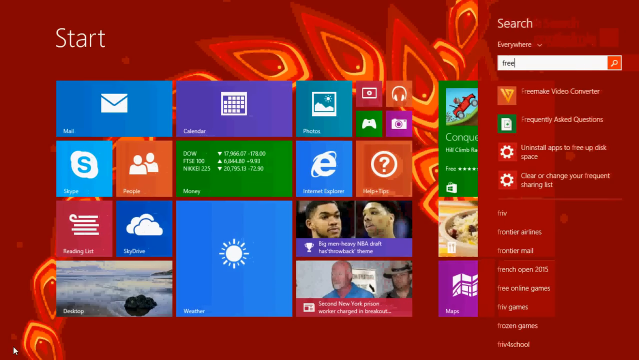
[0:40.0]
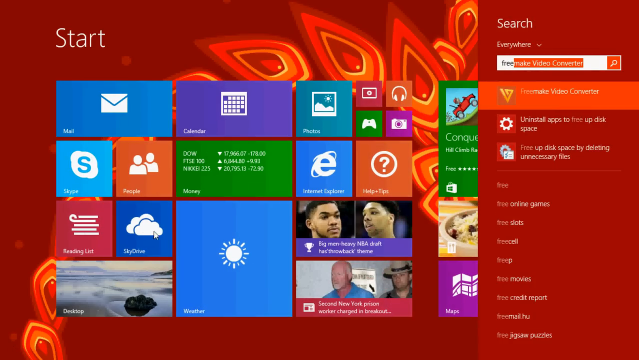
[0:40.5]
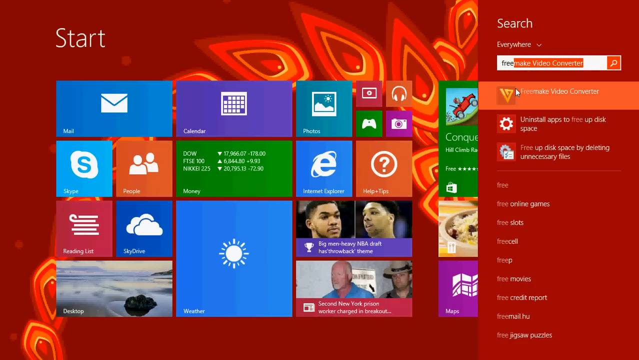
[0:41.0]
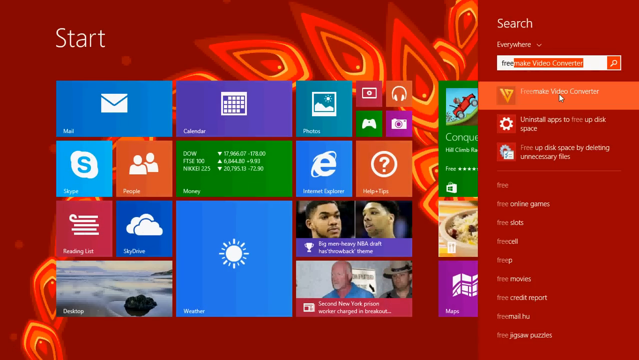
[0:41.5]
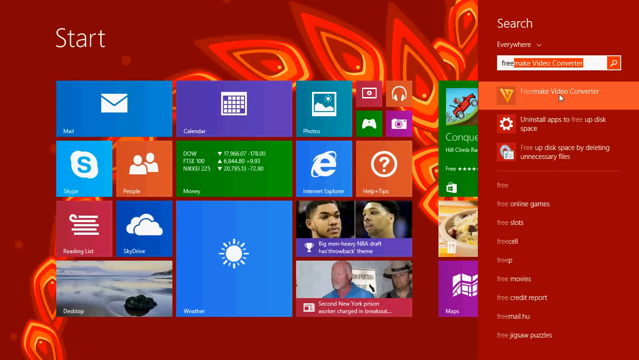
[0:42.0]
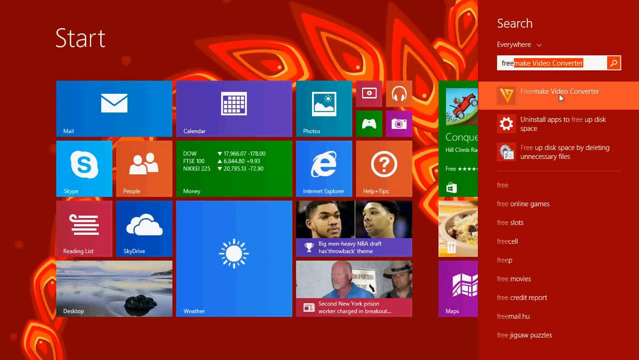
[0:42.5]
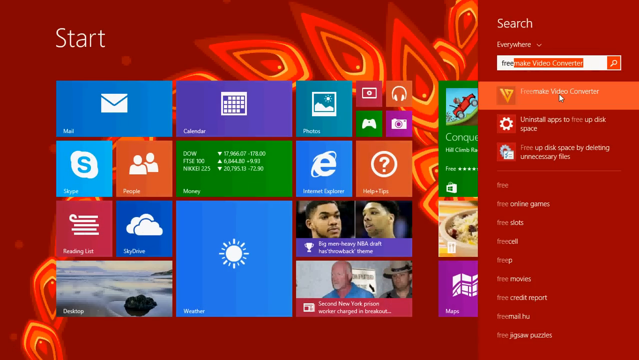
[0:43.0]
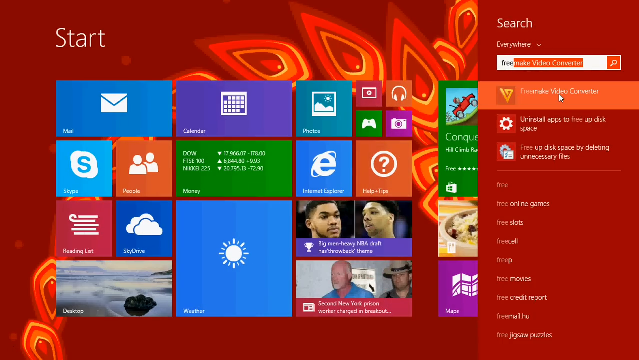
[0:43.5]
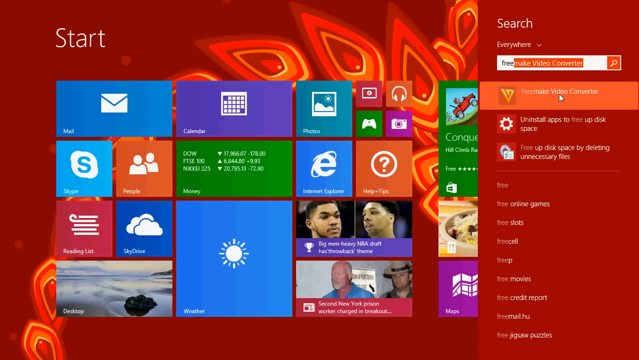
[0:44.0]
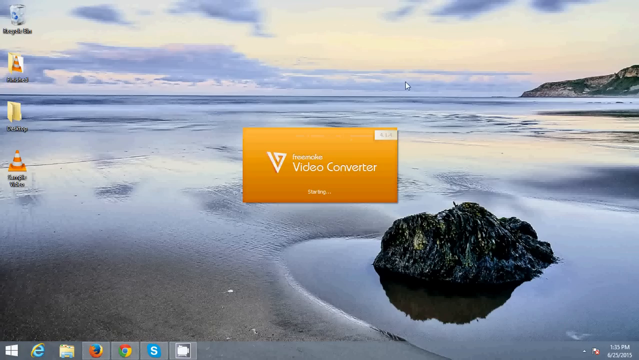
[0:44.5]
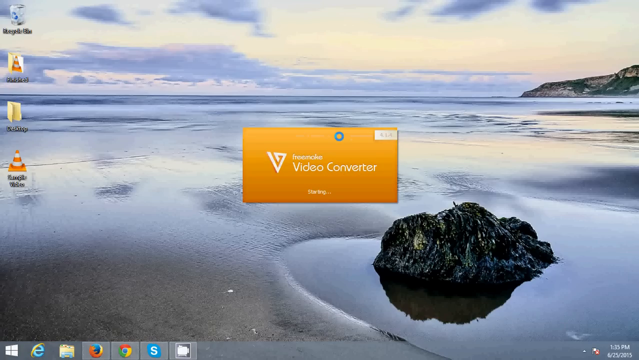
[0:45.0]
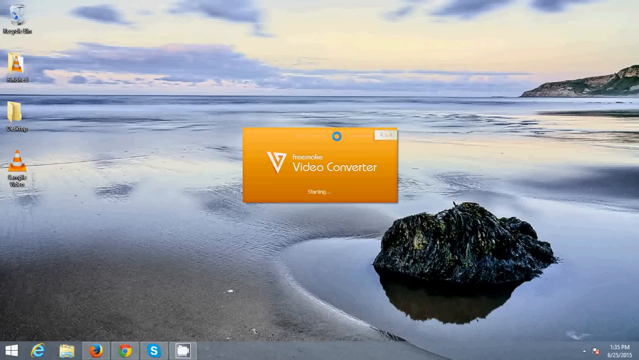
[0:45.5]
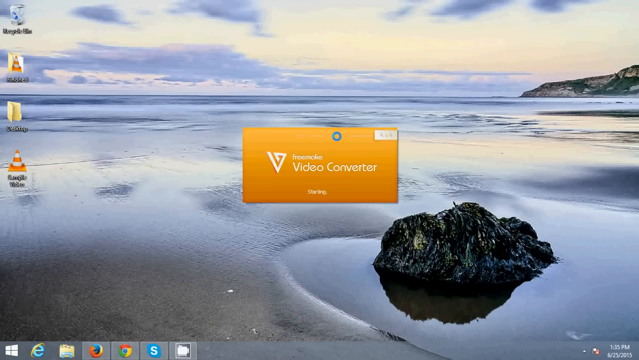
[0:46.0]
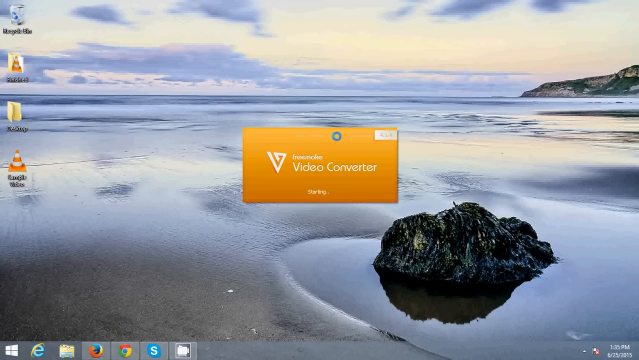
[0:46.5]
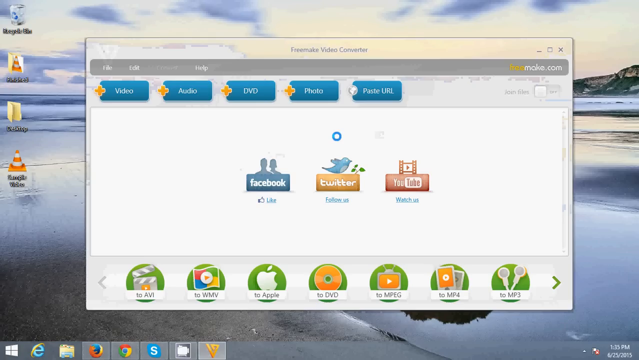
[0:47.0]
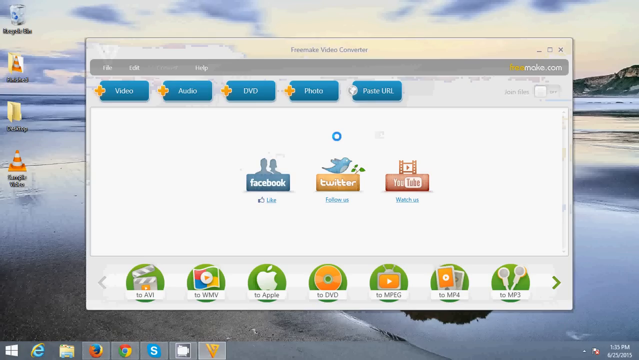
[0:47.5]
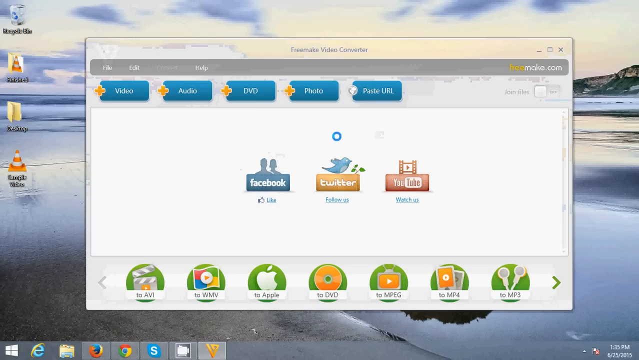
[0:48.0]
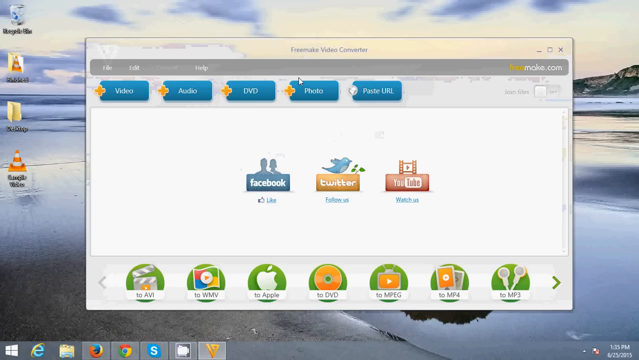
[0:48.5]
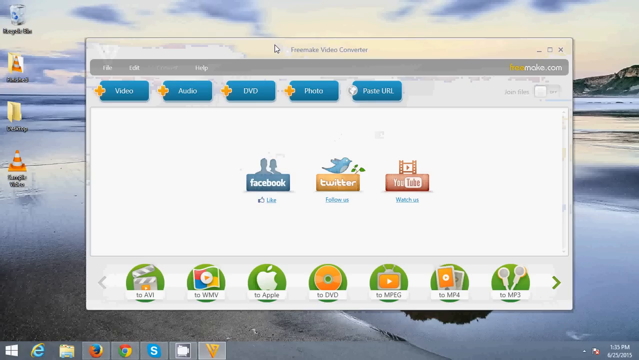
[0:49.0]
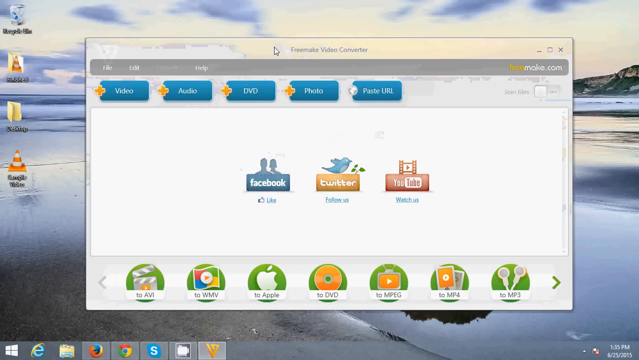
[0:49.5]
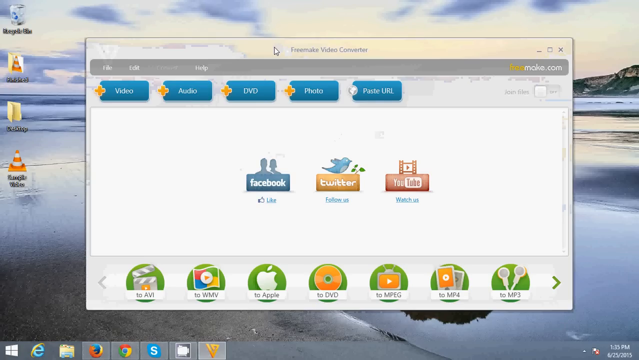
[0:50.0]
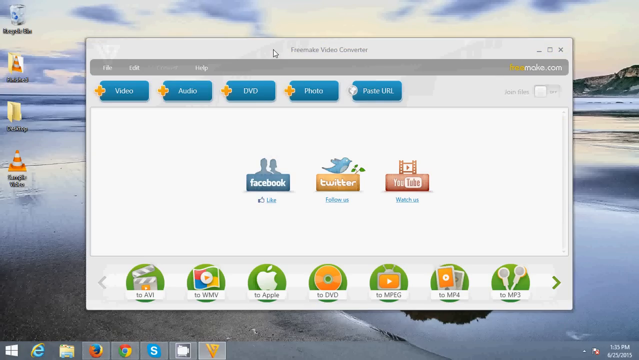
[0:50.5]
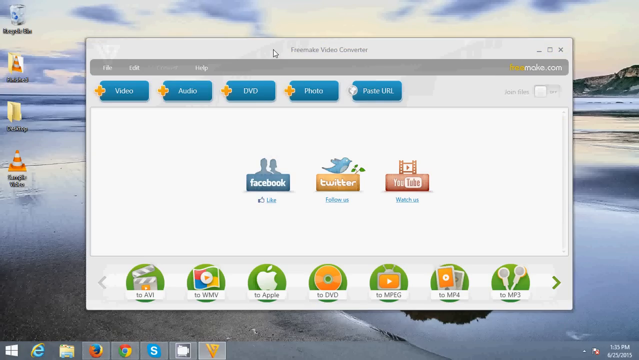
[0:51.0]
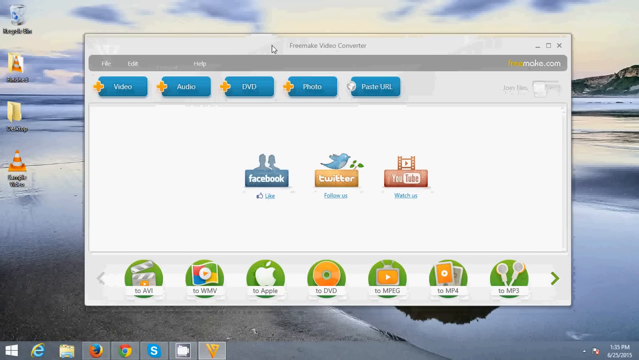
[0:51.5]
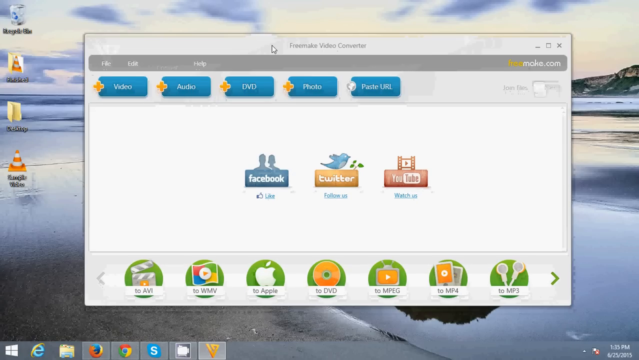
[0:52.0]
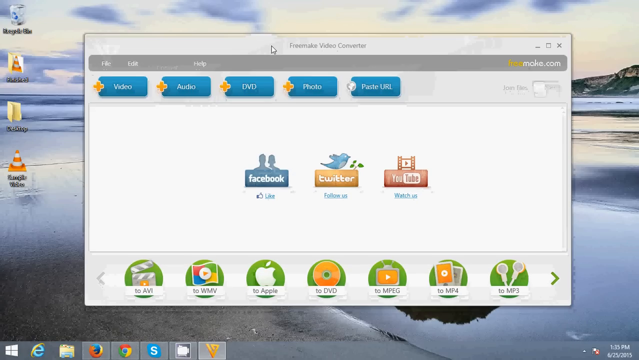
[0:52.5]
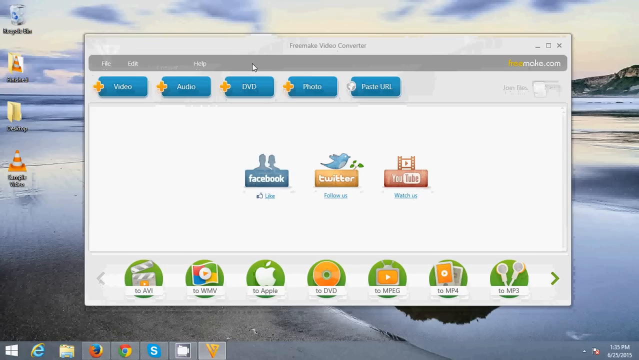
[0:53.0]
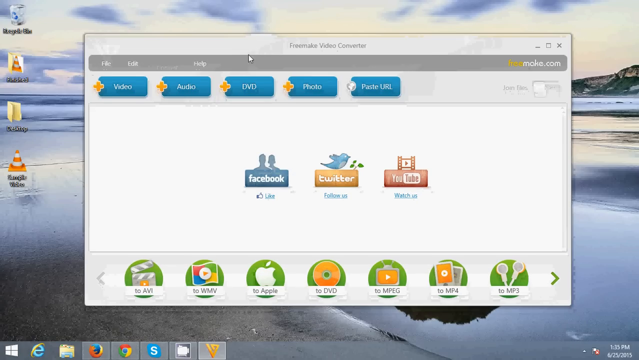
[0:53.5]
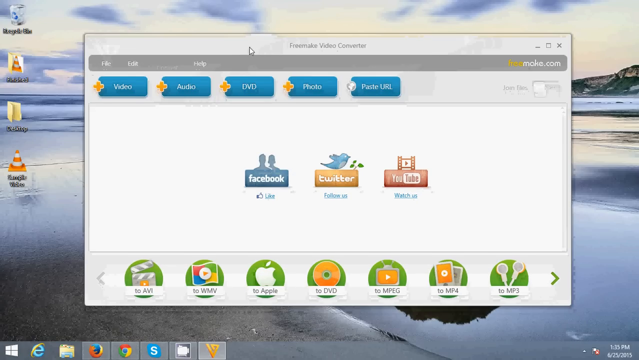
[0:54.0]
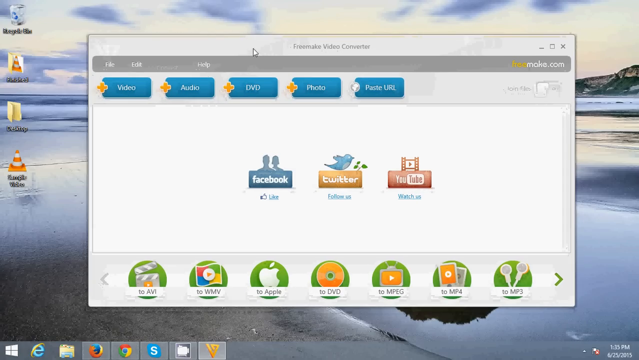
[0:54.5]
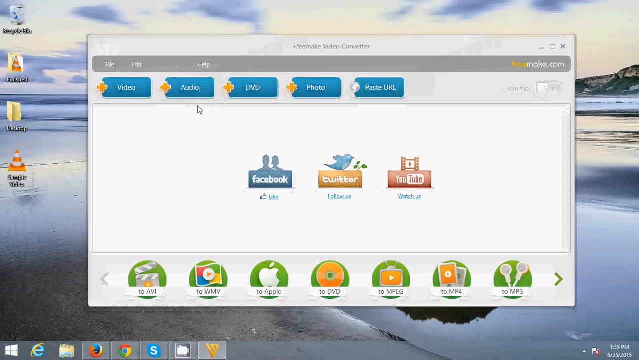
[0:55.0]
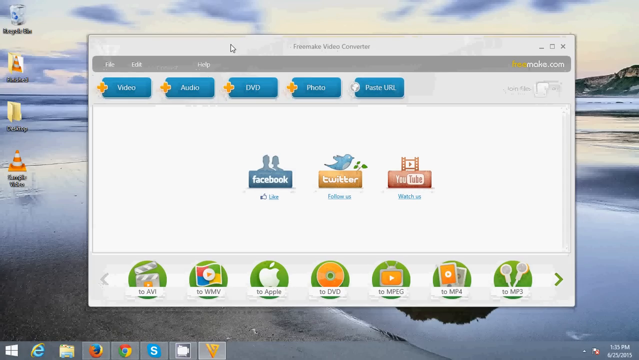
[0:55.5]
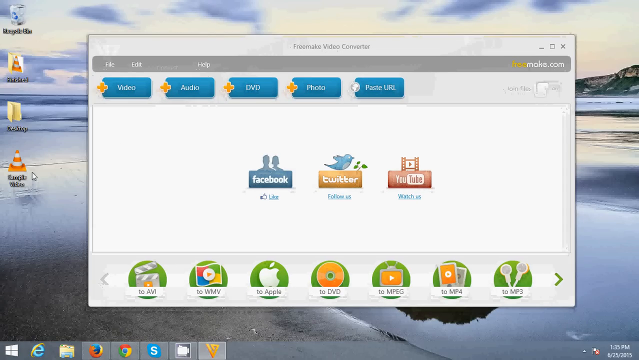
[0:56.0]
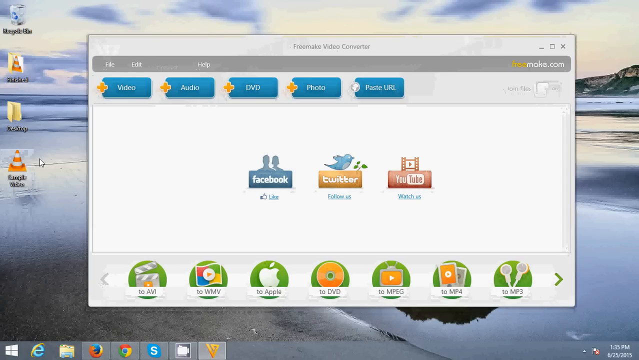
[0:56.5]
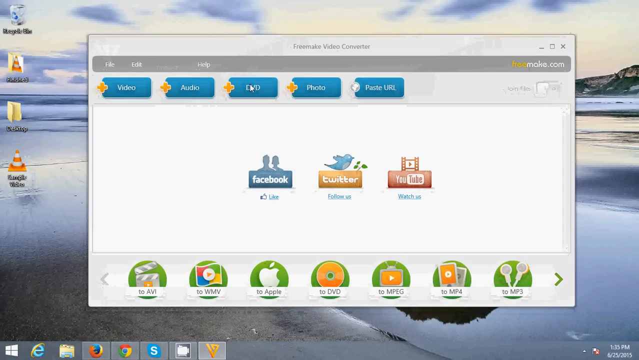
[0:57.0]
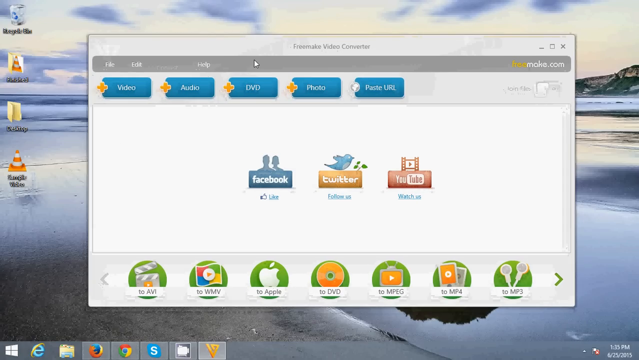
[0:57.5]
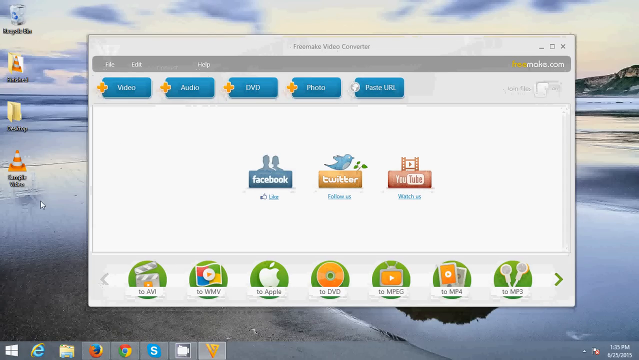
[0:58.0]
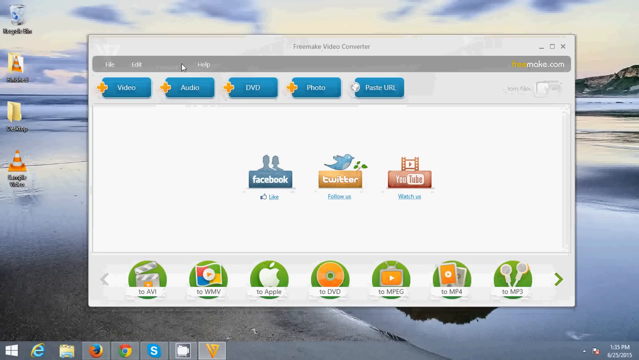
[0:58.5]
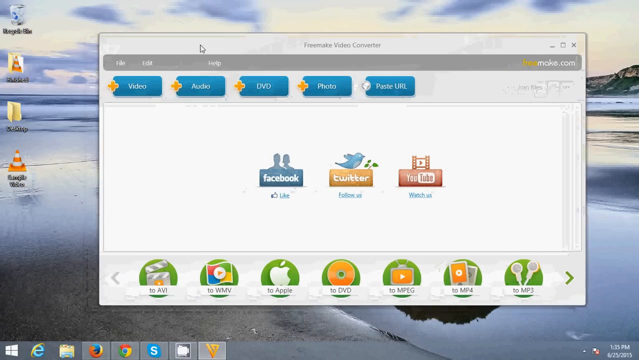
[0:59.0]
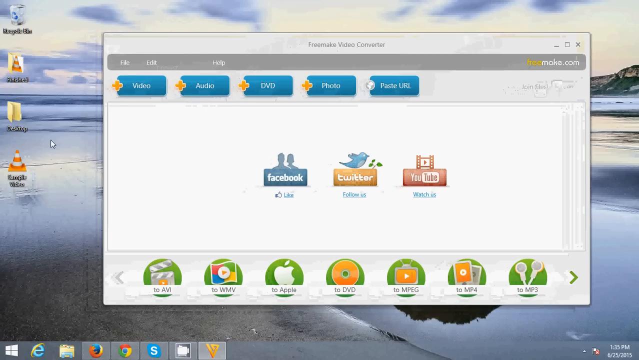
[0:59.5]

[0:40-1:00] The red Start screen is shown, with the search bar on the right-hand side. Someone types "free make video converter" into the search bar, and an app appears underneath with a logo like an inverted triangle. The white cursor clicks it, which returns to the desktop, where a yellow box appears on top of the seaside desktop as the video converter program loads, and the cursor turns into a small circular loading icon. A white box then opens with multiple options: Facebook, Twitter and YouTube, and at the top, Video, Audio, DVD, Photo and Paste URL. The cursor changes and the boxes are moved slightly so that the triangle traffic cone icon, the video, on the left-hand side of the desktop can be reached, and it is clicked.